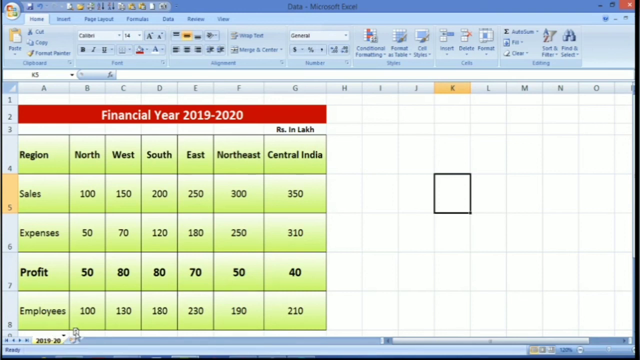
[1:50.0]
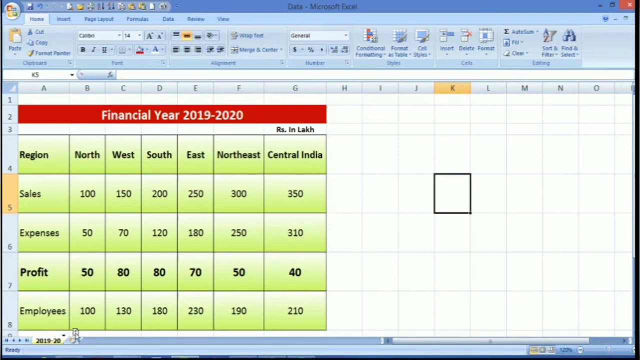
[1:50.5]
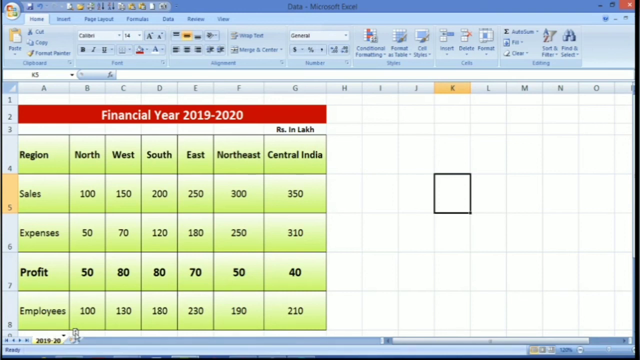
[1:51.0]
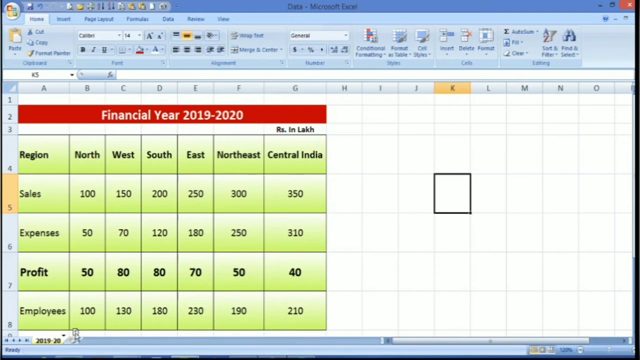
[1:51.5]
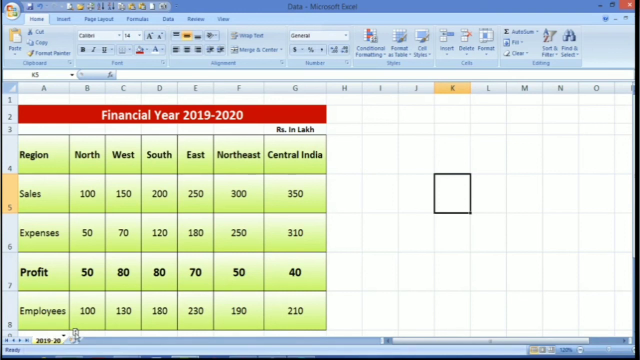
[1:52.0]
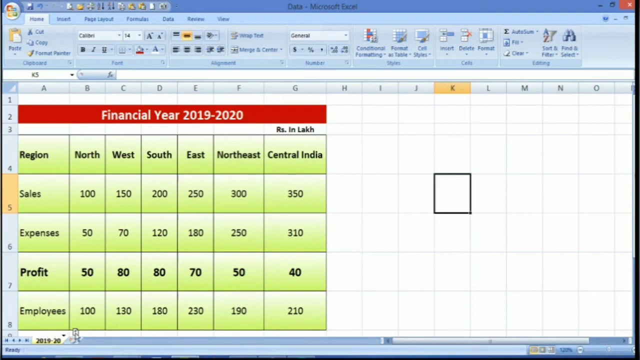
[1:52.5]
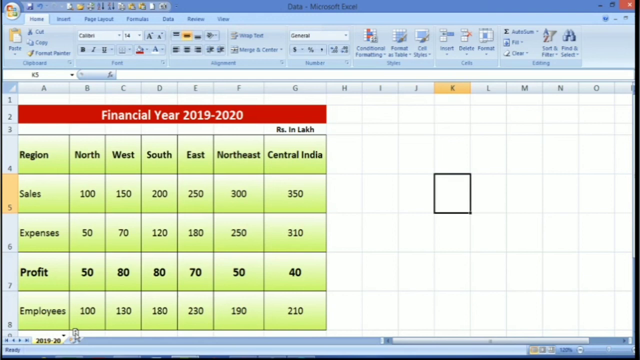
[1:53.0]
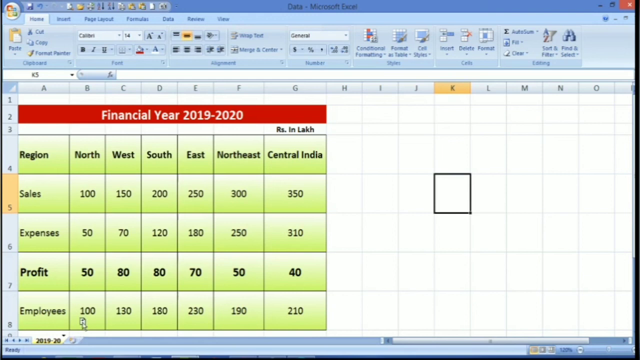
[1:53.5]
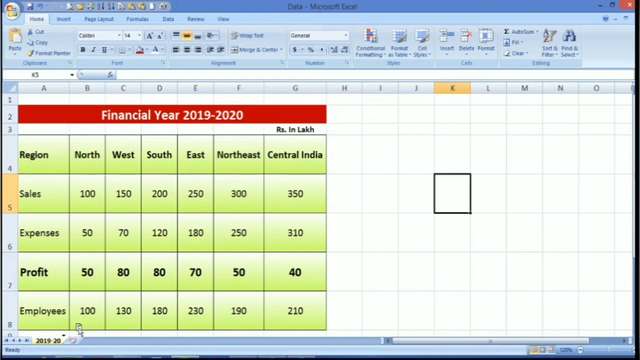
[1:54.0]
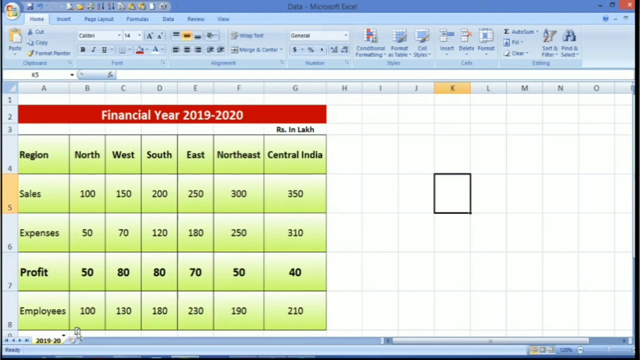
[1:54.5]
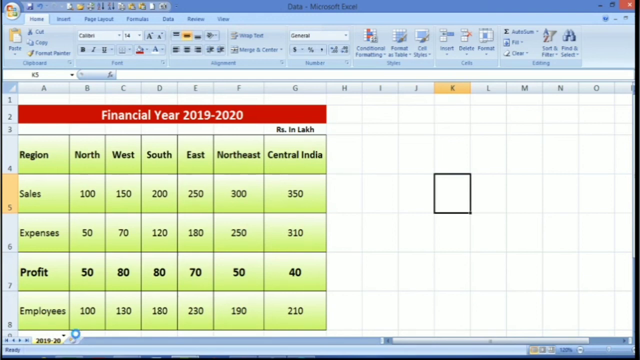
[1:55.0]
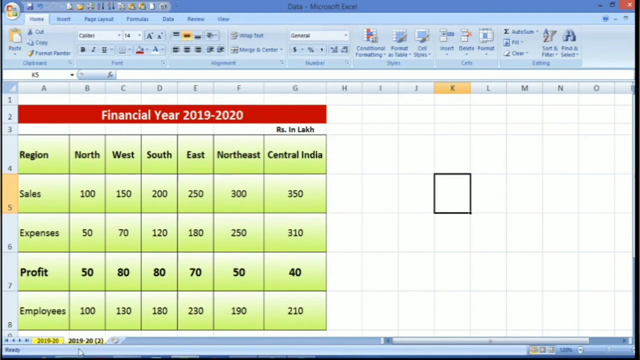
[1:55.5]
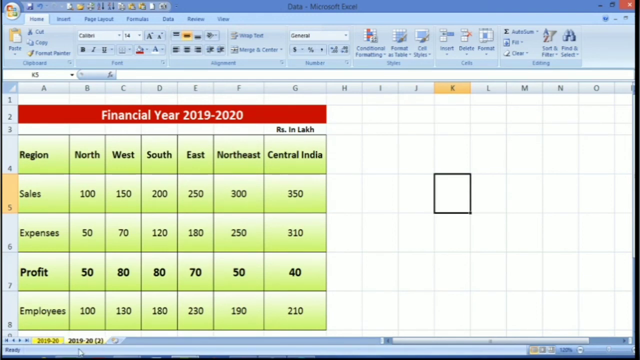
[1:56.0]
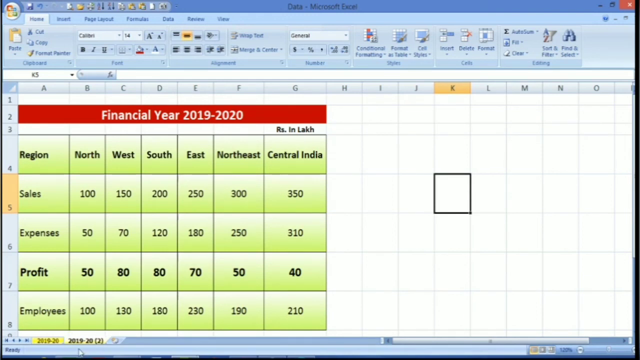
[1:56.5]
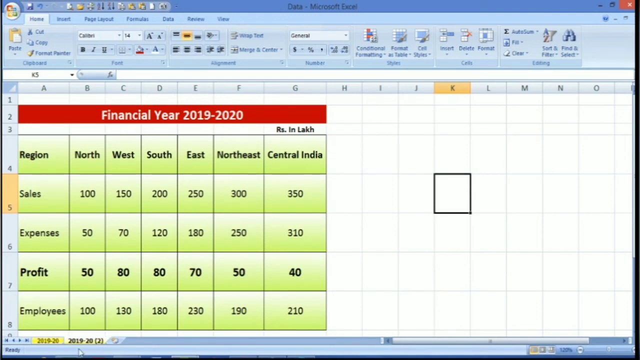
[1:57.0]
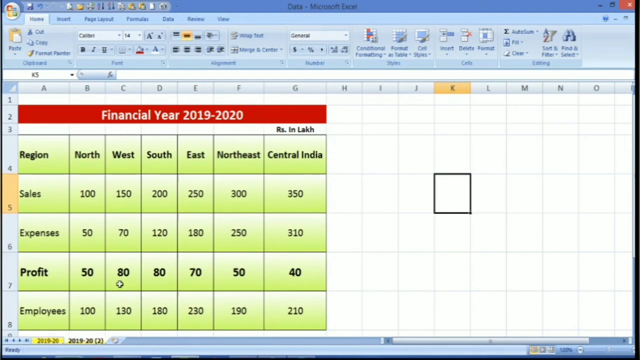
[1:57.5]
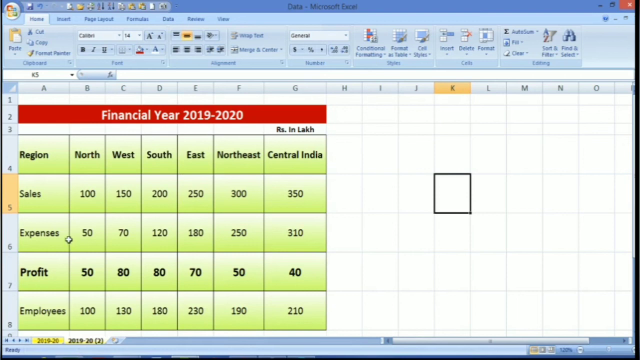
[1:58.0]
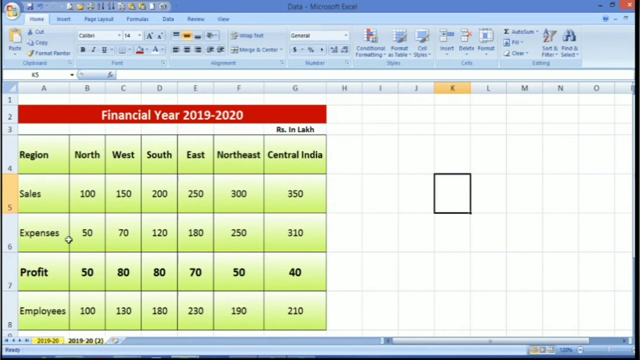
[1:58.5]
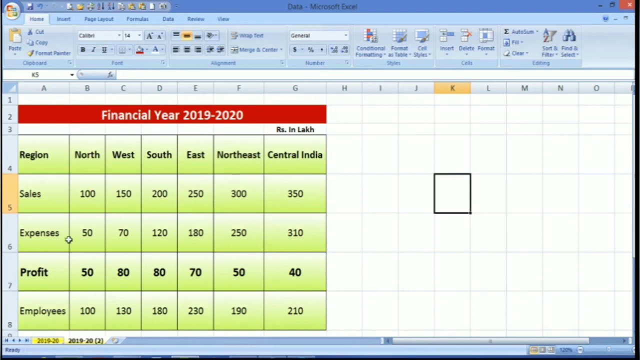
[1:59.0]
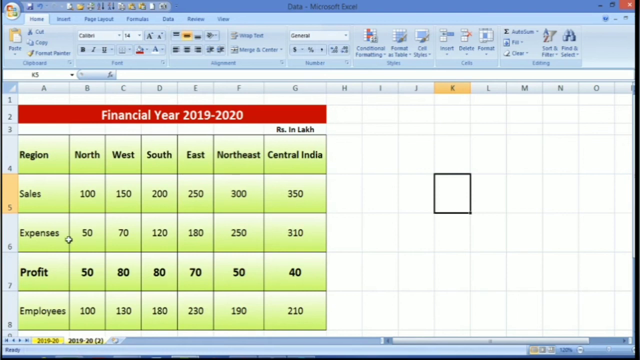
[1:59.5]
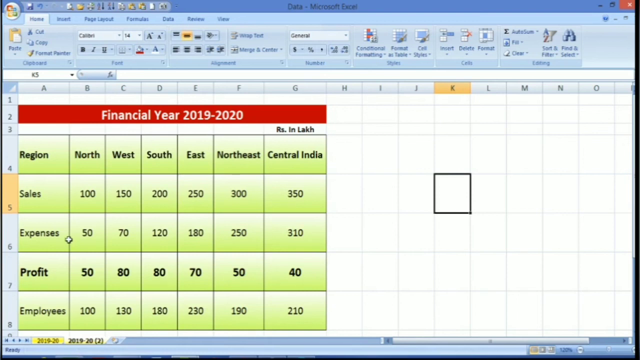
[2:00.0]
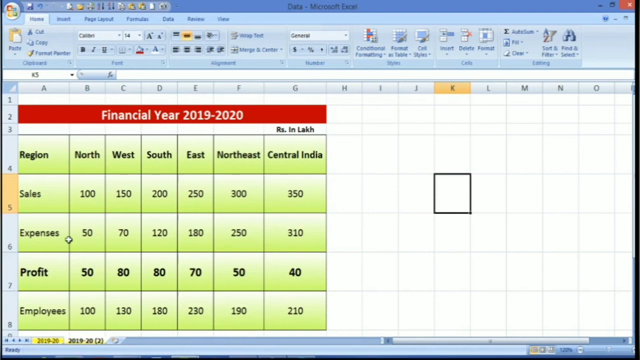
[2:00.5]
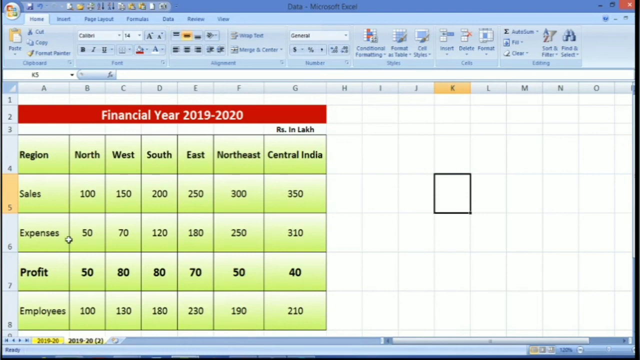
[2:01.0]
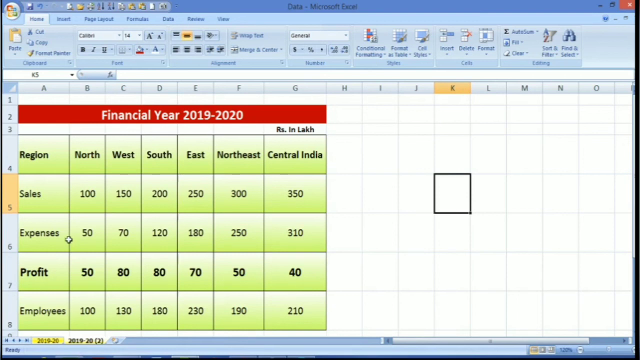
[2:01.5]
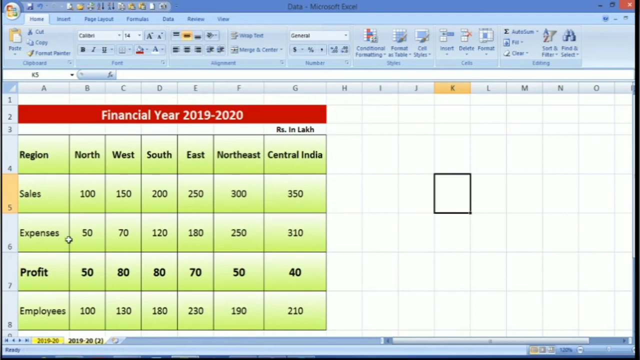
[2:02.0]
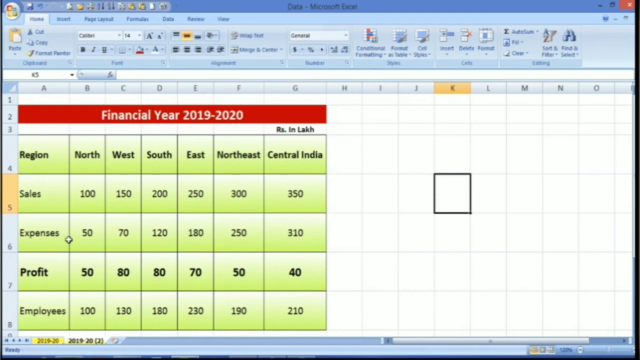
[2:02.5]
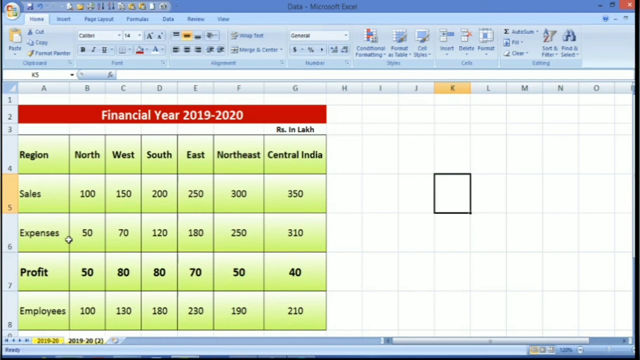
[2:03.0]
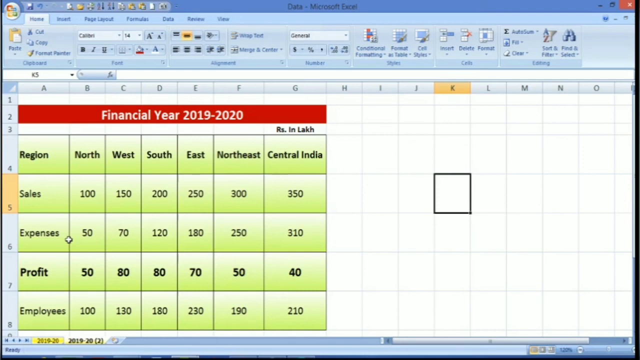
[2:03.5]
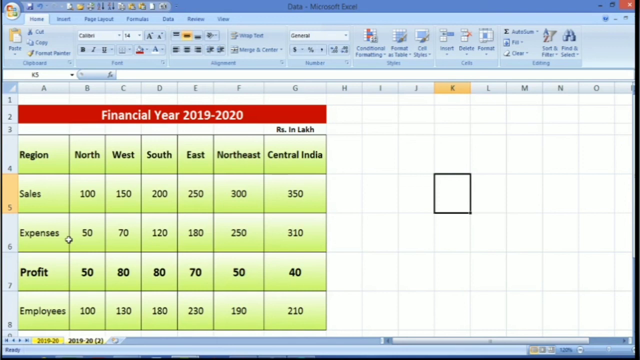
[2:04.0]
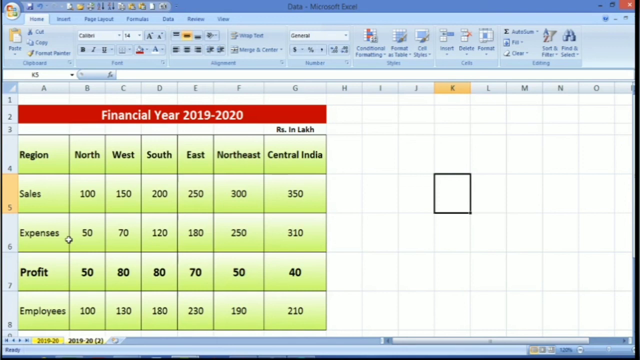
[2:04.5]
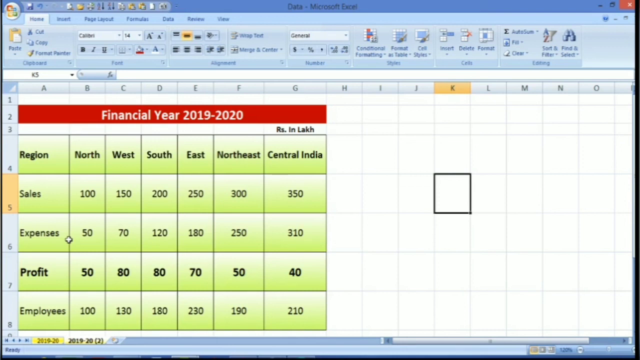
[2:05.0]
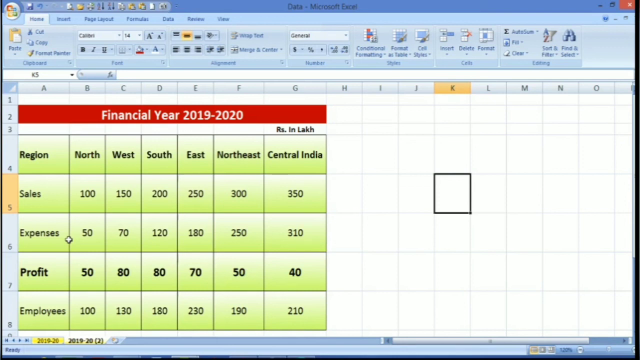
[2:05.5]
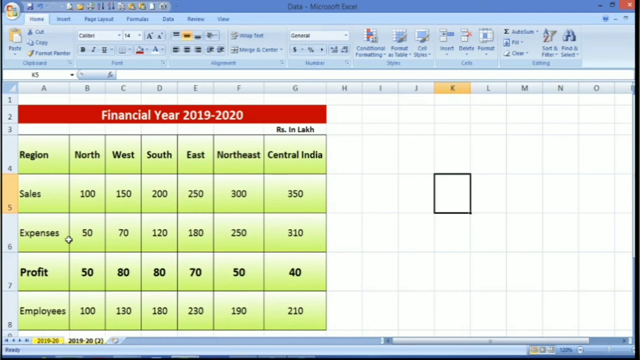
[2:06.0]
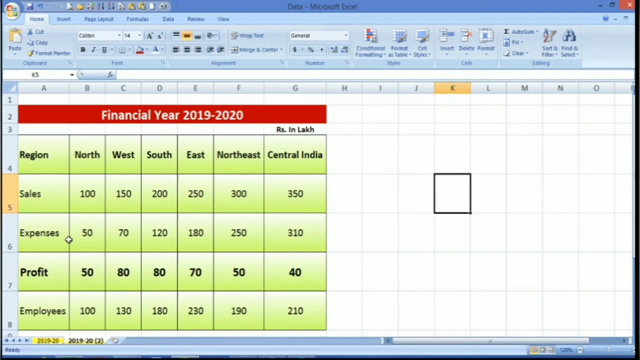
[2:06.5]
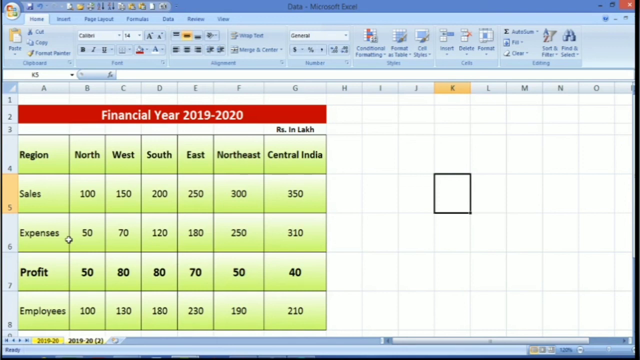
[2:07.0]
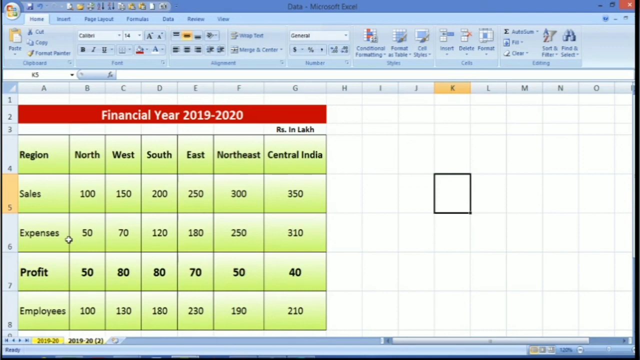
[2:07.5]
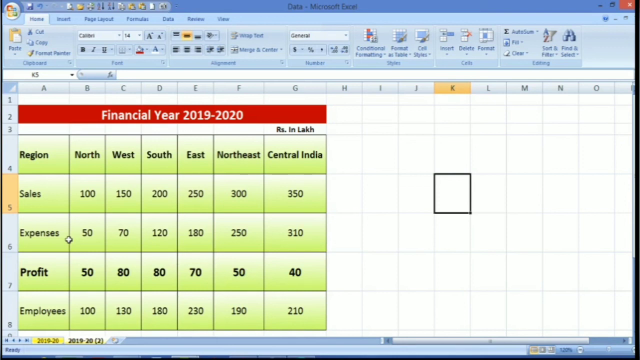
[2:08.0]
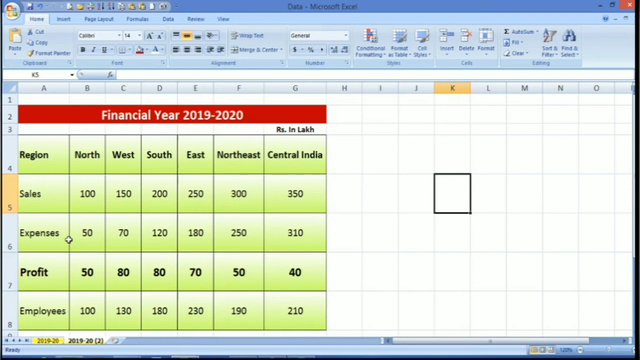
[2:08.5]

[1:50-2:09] The video is slightly wider than it is tall and shows someone working in Microsoft Excel. At the top, the worksheet is labeled "data", with the usual tabs below; Home is selected, showing its usual buttons and commands. The worksheet below is titled "Financial Year 2019-2020" in white on a red background. The rows are region, sales, expenses and profit, and the visible columns are North, West, South, East, Northeast and Central India. The area is light green. Cell K5 is selected, and the mouse appears to move over the bottom, where another tab is created and given a date.